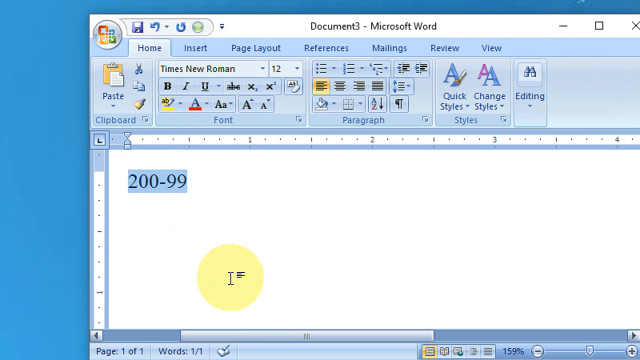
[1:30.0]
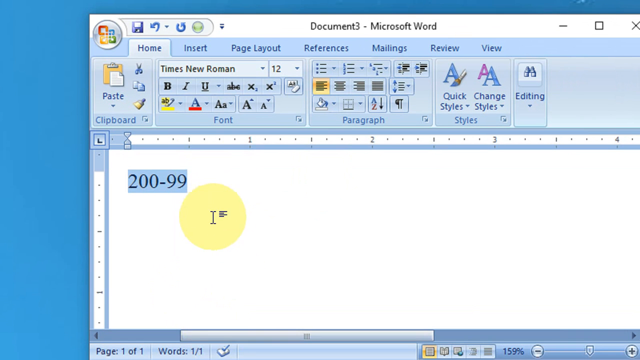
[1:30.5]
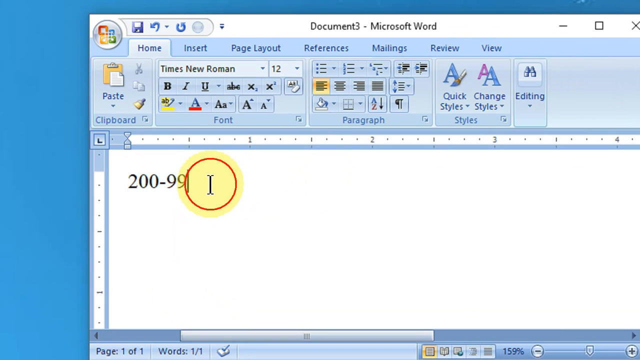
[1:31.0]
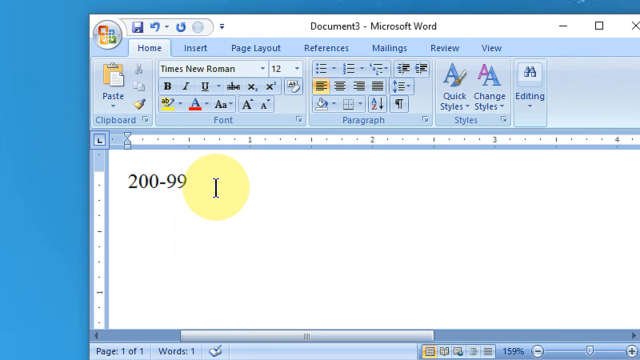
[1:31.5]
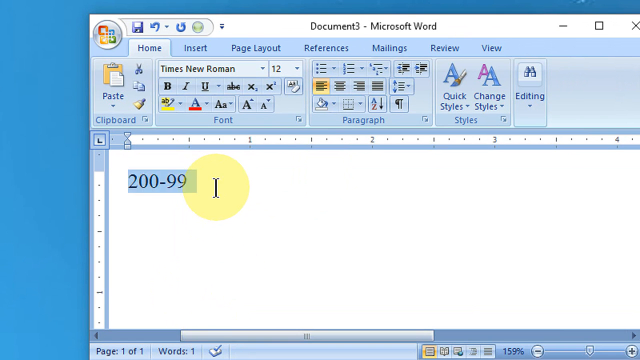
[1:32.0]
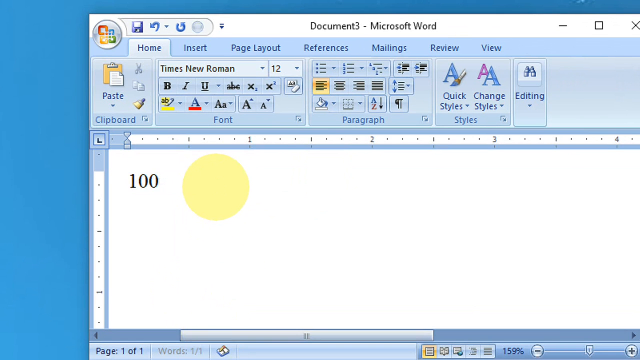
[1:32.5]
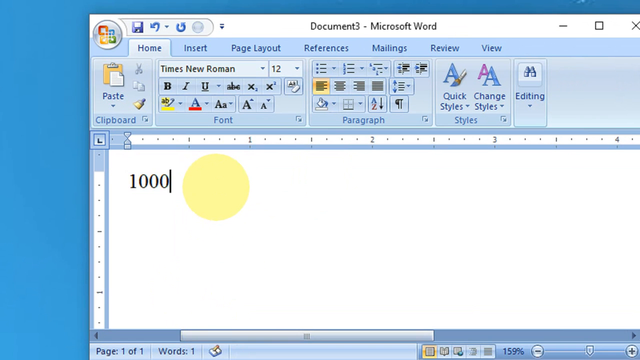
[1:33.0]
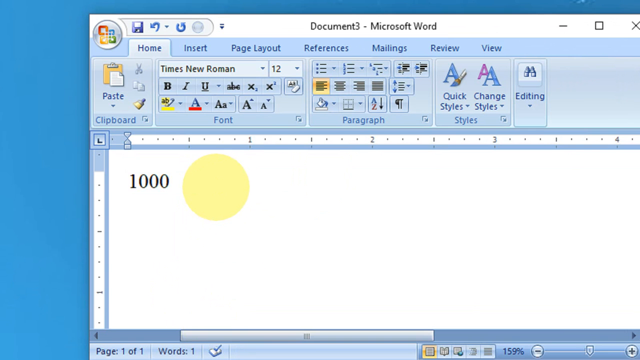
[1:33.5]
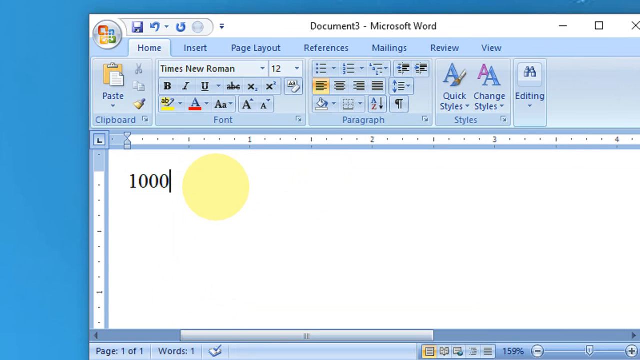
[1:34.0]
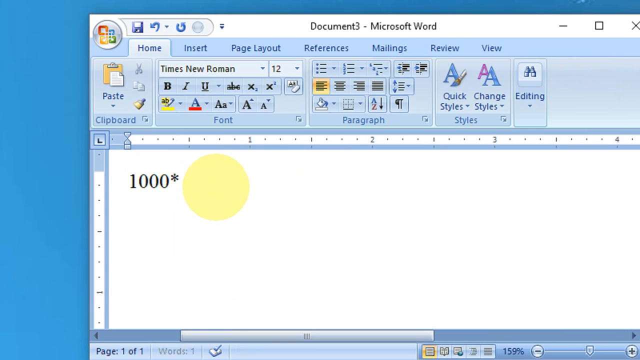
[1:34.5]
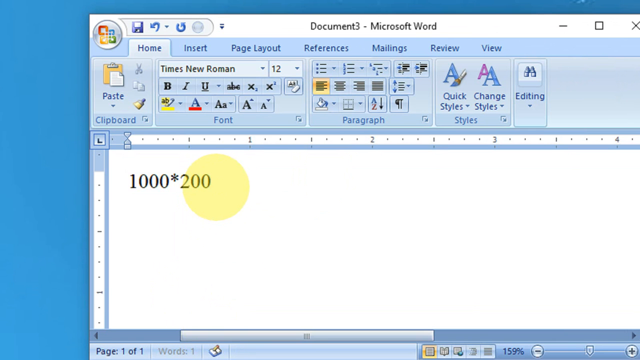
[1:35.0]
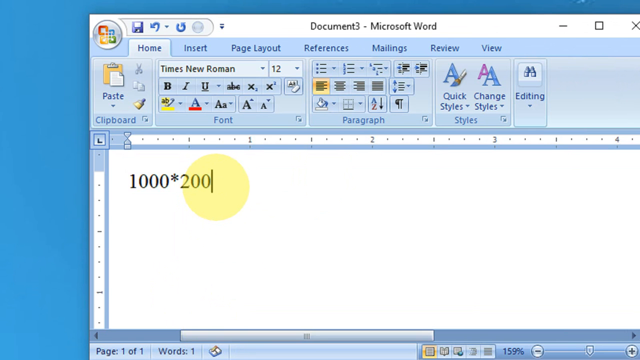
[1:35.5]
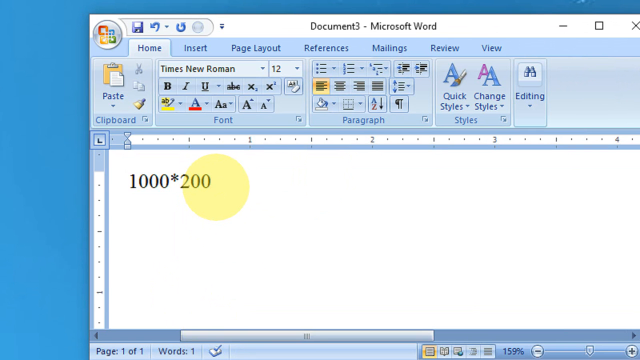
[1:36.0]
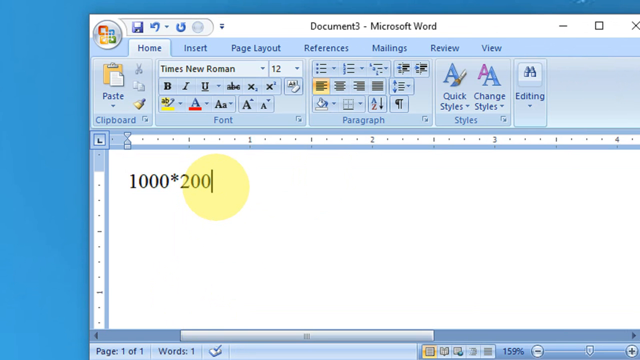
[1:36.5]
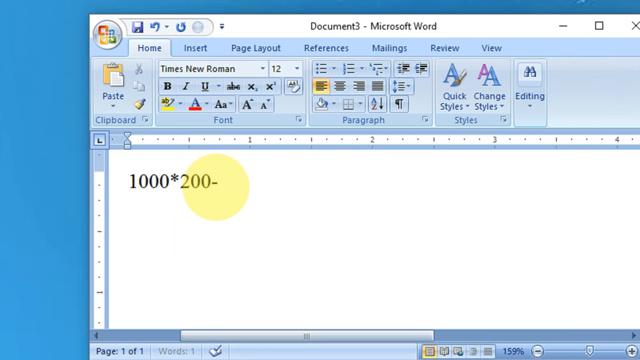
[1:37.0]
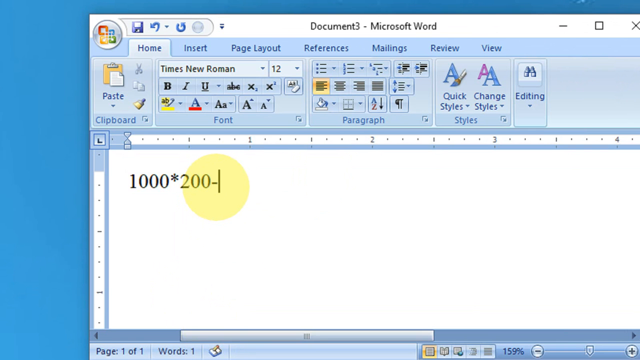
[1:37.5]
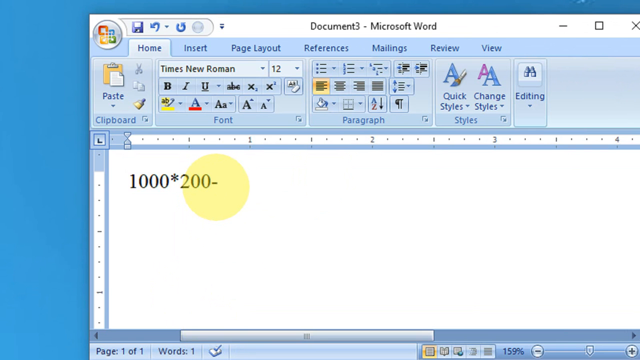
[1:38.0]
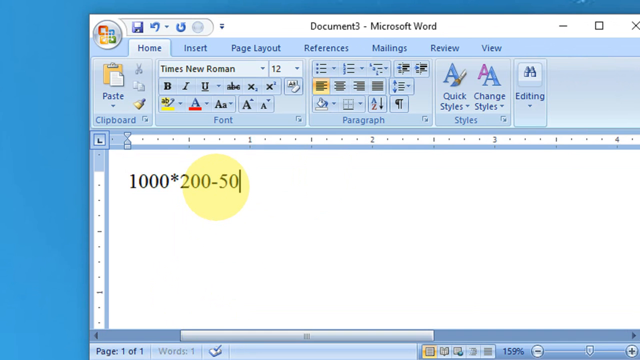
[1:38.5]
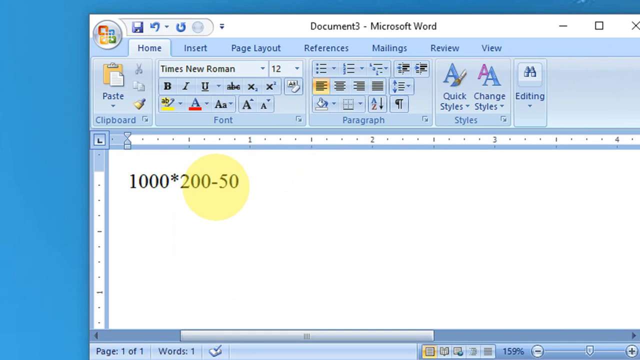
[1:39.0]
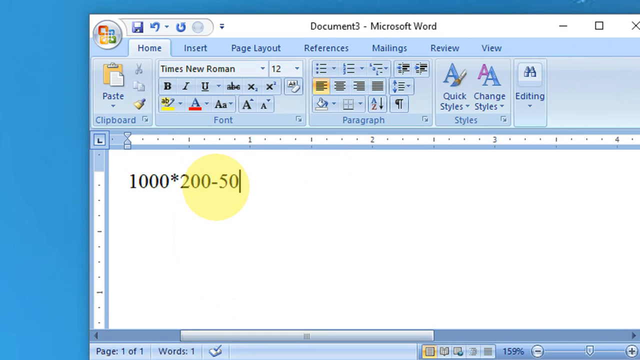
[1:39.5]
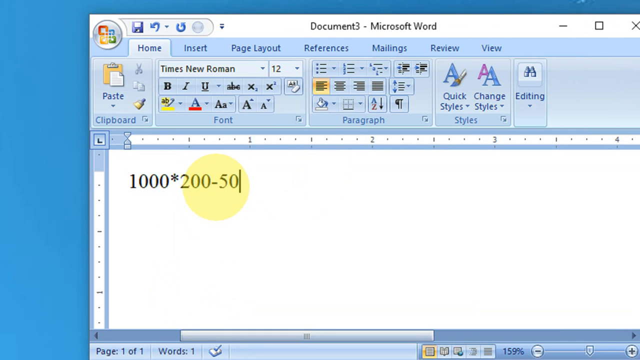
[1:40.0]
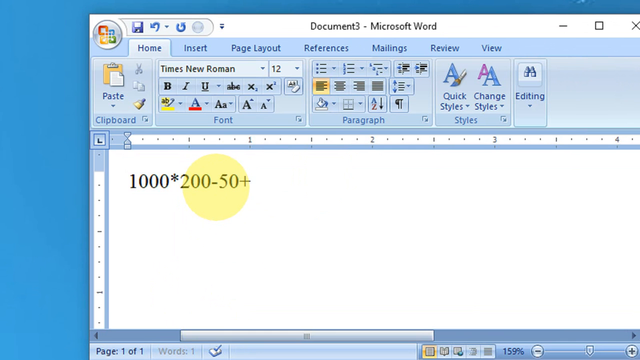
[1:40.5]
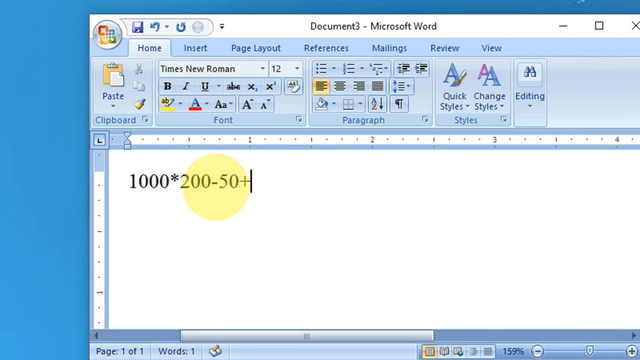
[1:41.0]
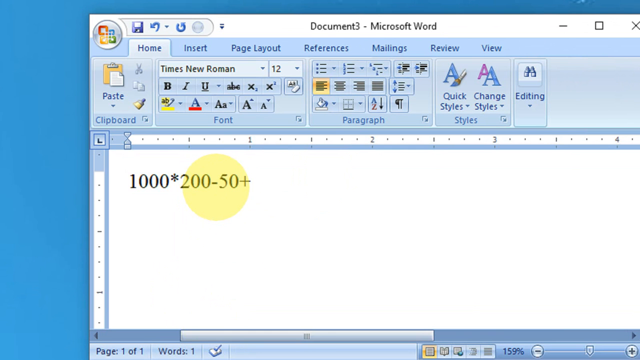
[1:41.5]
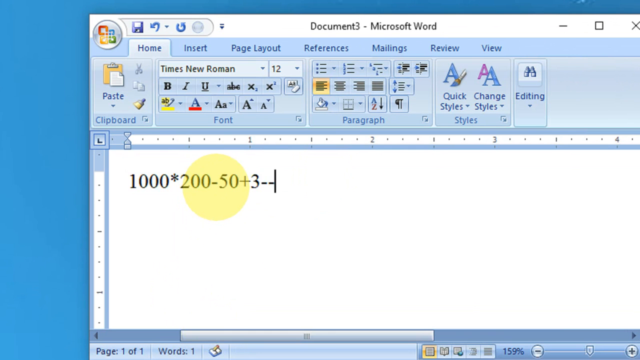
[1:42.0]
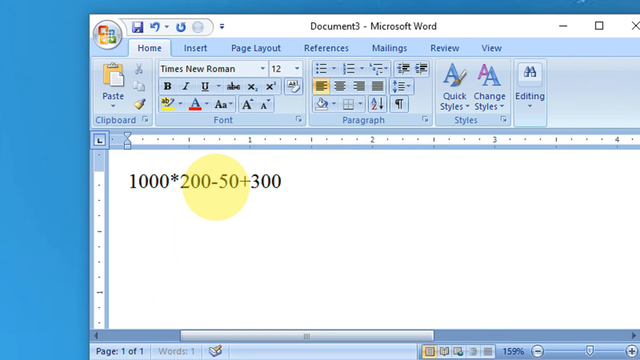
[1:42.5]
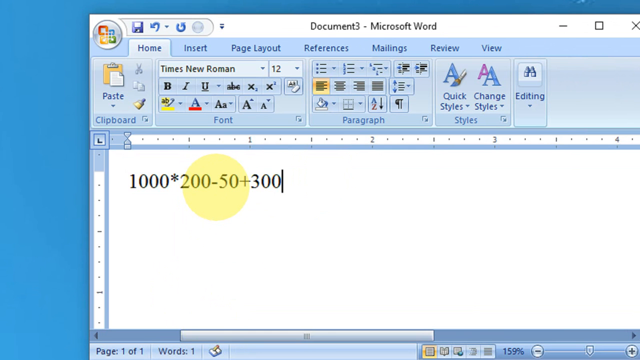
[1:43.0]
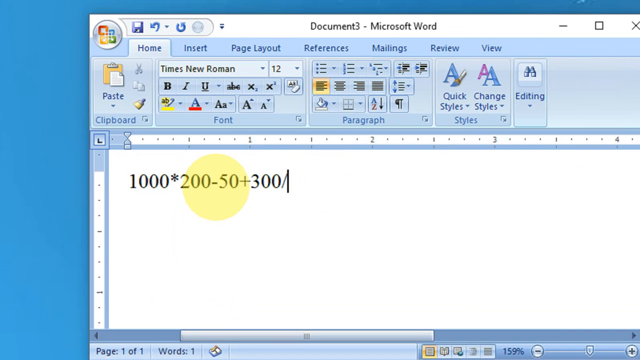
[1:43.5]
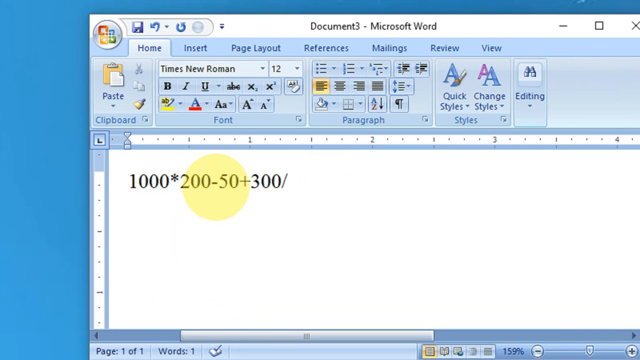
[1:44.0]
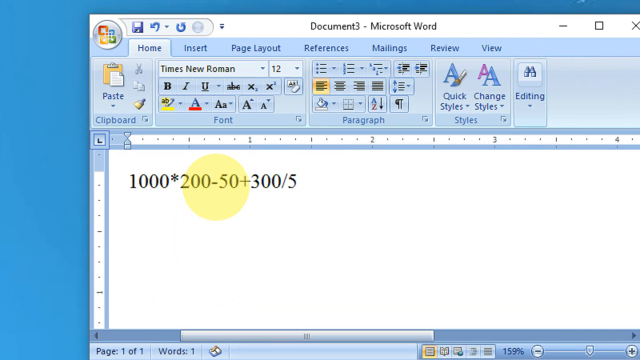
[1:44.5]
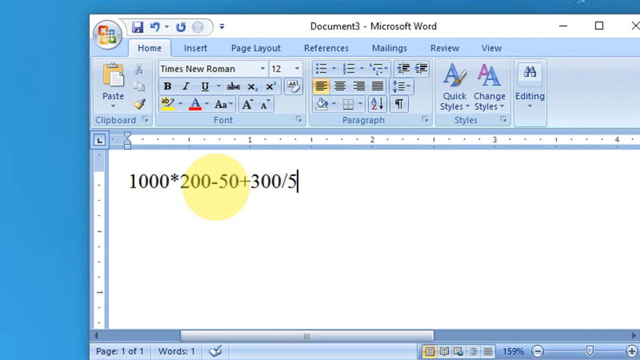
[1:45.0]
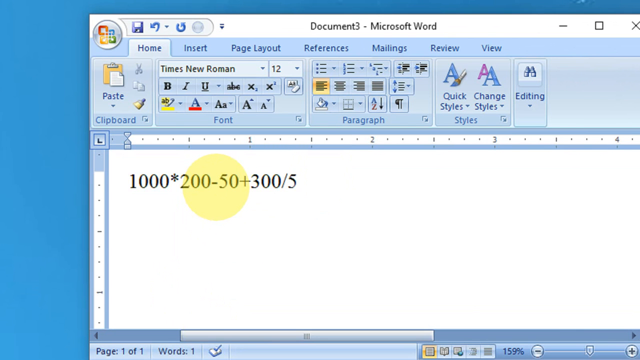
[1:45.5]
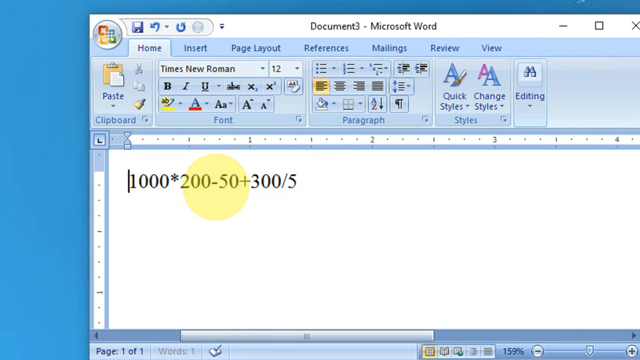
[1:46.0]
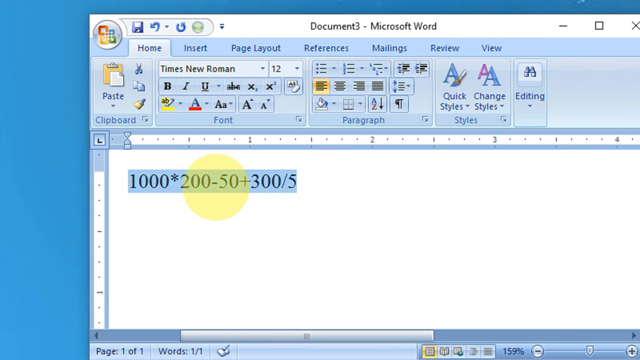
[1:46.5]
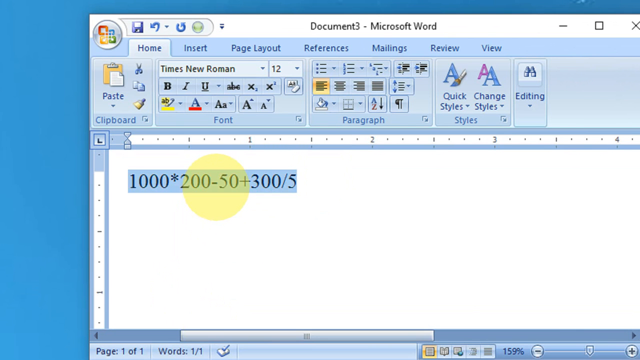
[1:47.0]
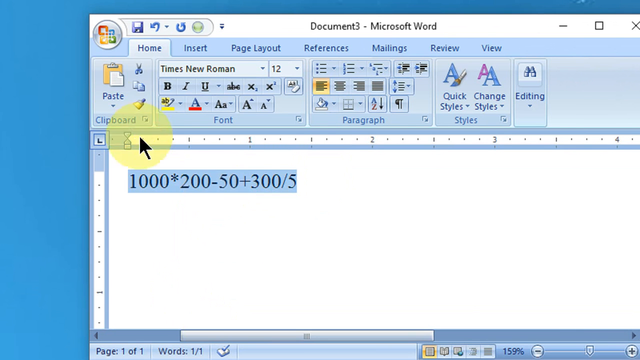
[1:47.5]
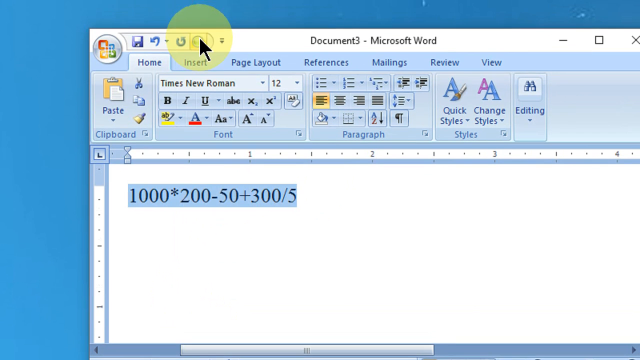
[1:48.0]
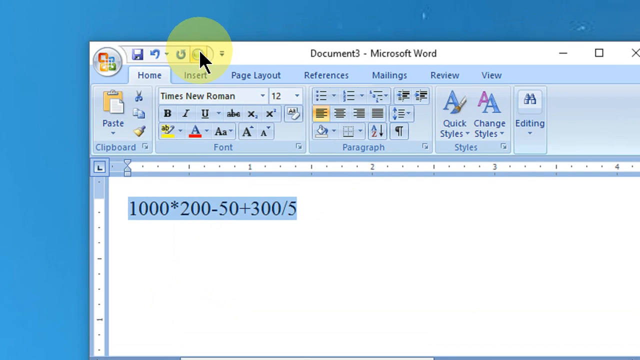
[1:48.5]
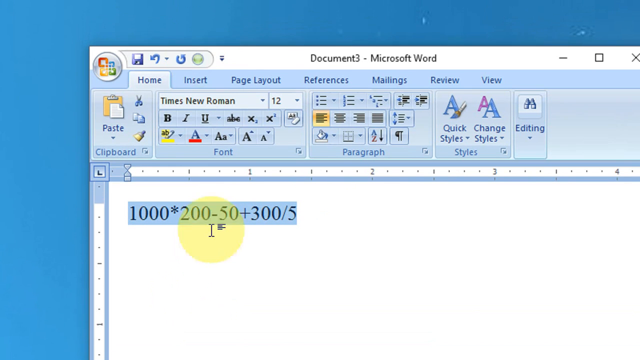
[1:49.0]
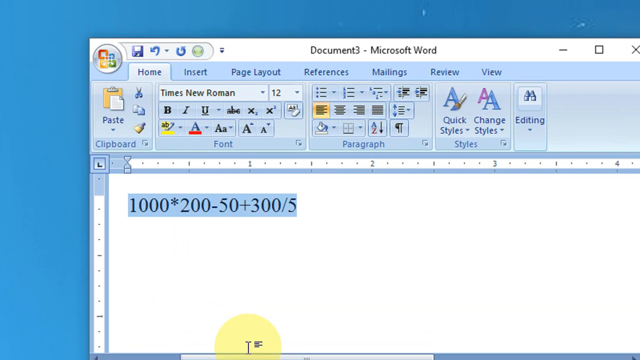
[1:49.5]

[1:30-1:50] The user highlights all the text, 200 minus 99, deletes it, and types another expression: 1000 times 200 minus 50 plus 300. The user accidentally types minus minus, deletes it and replaces it with 300 divided by 5. The user then highlights all of this, moves the mouse cursor to the upper top left of the window and clicks a sphere icon colored light green, and the red sphere ripple effect appears to indicate the click. The user then moves the cursor down the page, skipping over the text. While text is being written, an animated icon switches from a tick on a page to a pencil writing on a page, changing depending on whether the user is typing.